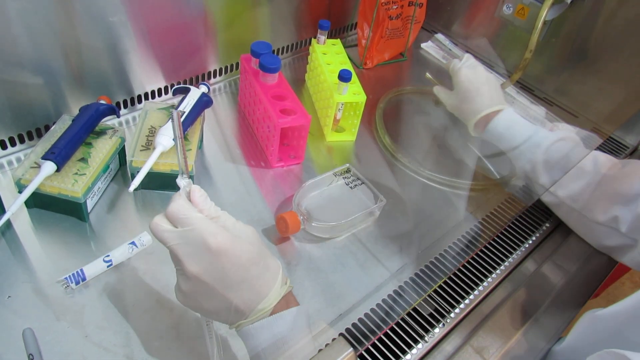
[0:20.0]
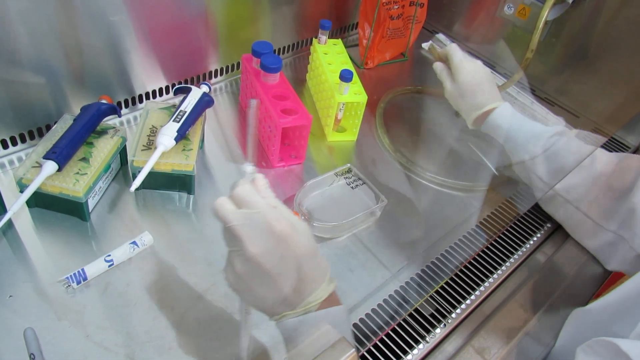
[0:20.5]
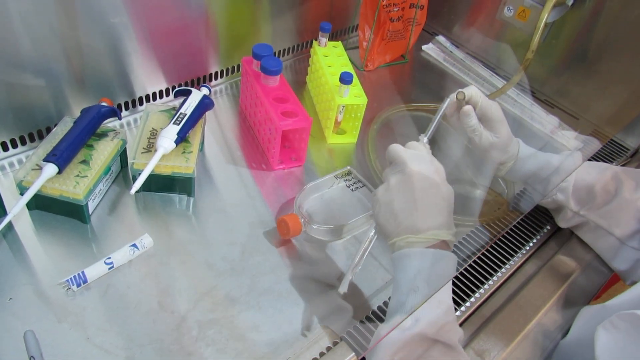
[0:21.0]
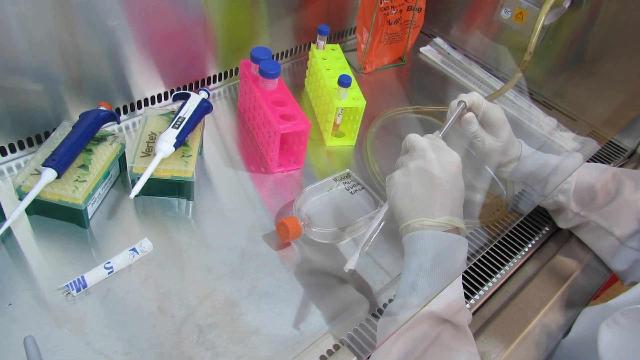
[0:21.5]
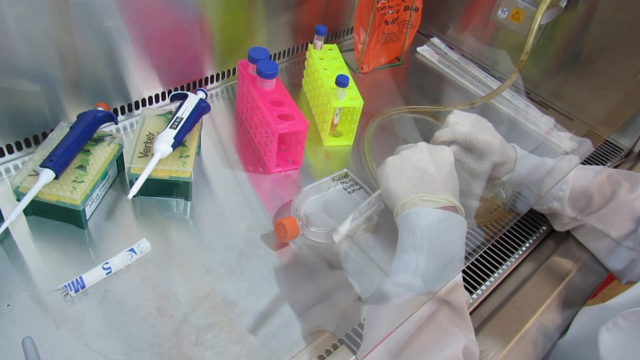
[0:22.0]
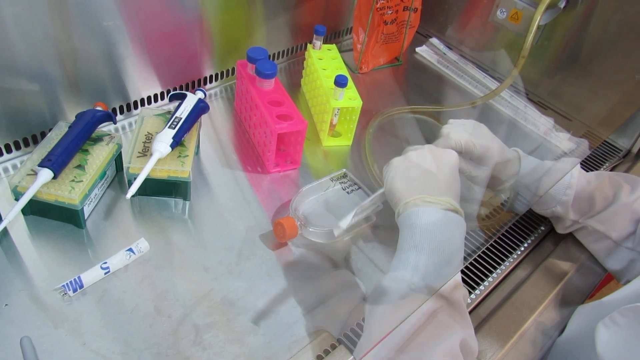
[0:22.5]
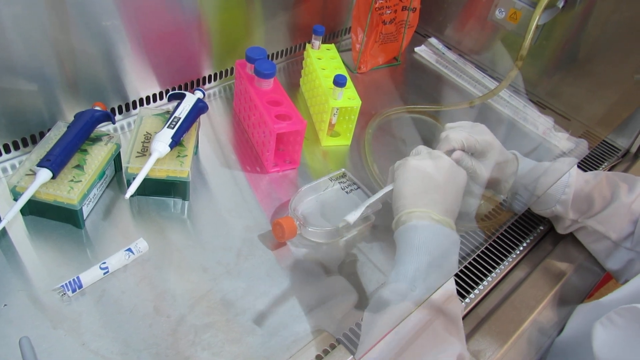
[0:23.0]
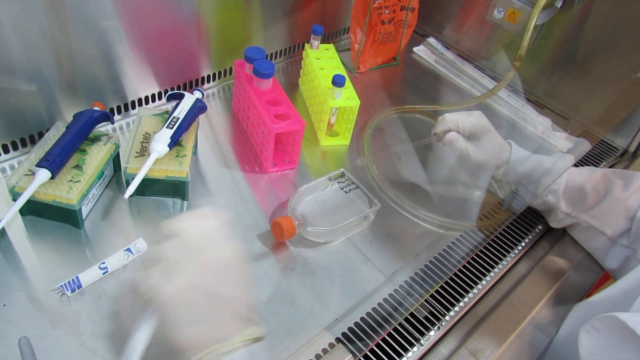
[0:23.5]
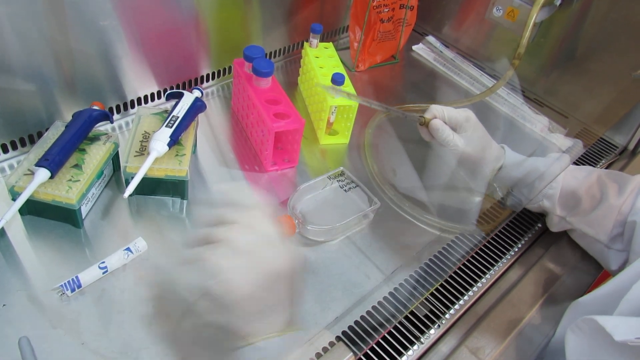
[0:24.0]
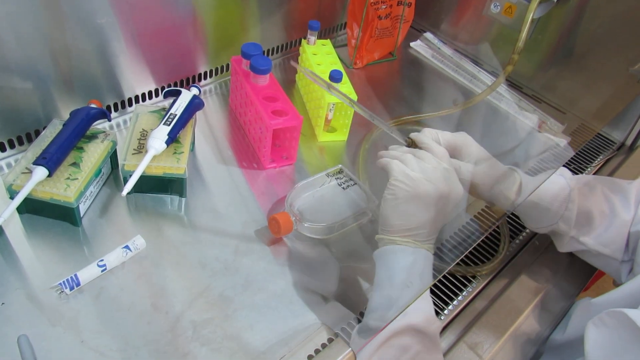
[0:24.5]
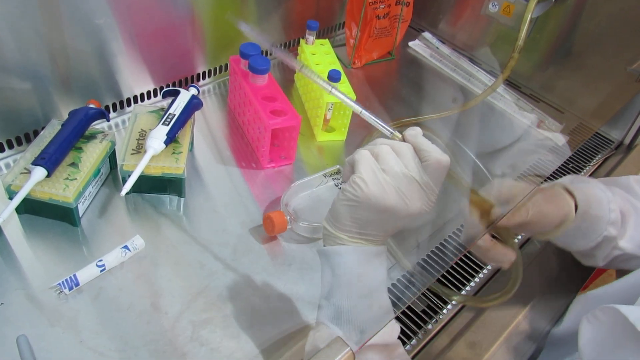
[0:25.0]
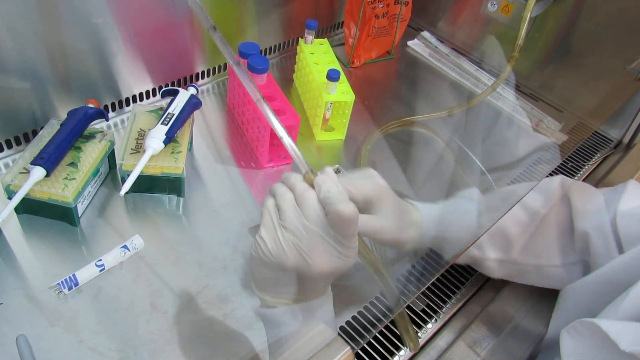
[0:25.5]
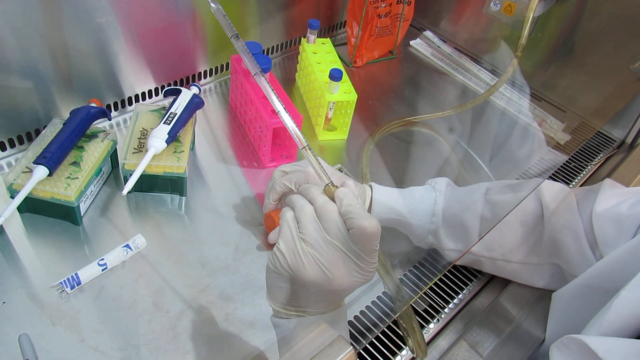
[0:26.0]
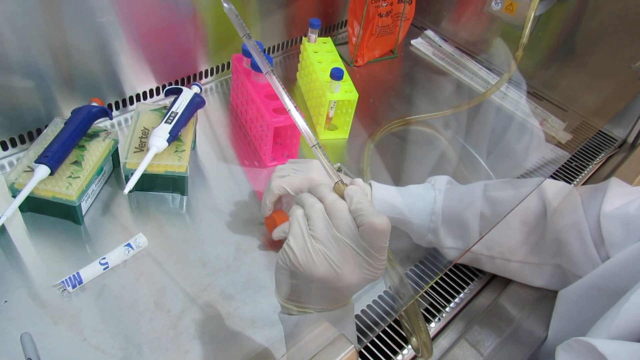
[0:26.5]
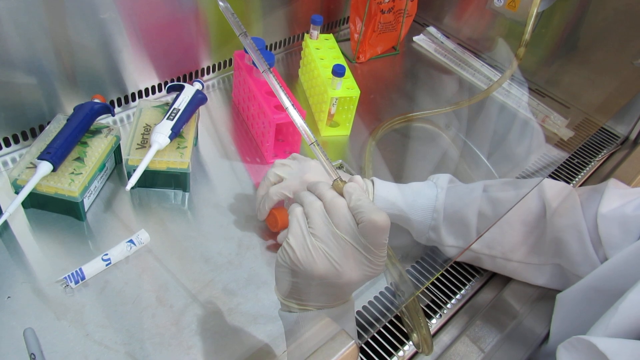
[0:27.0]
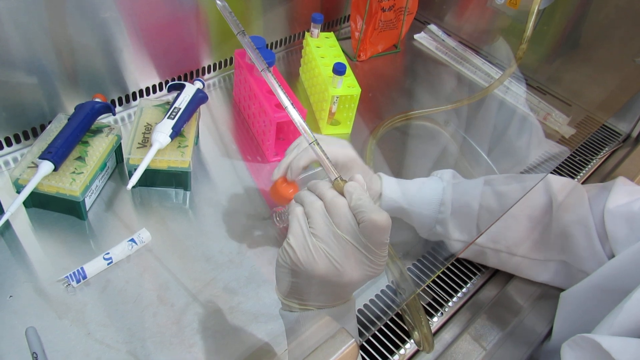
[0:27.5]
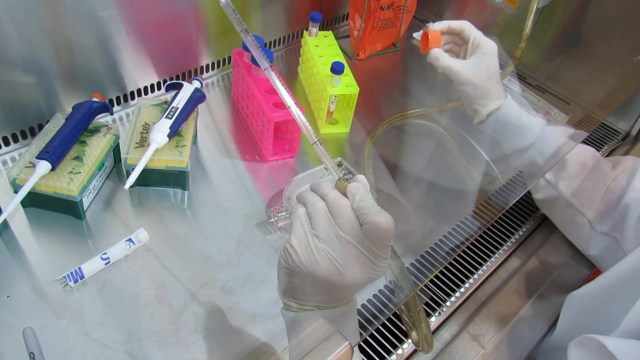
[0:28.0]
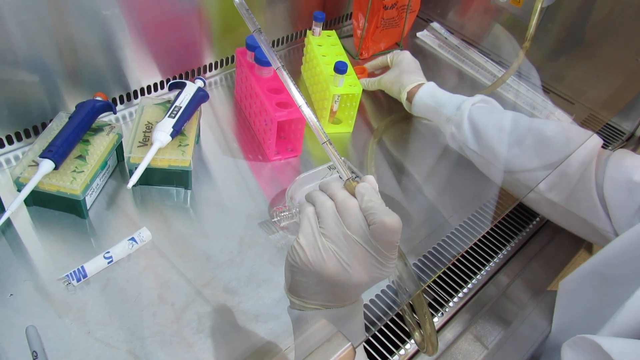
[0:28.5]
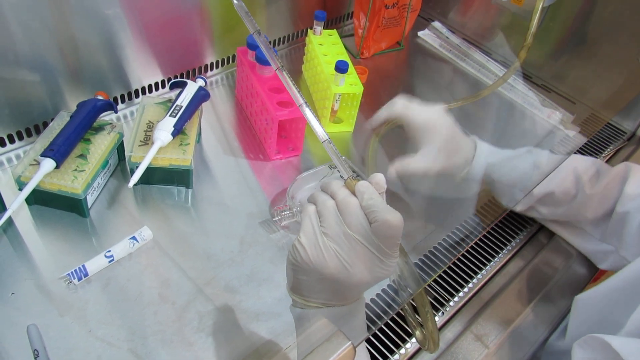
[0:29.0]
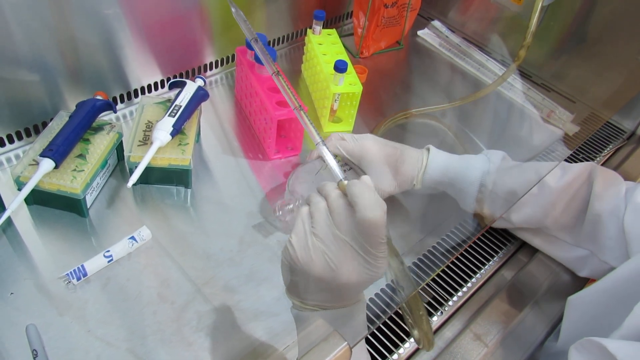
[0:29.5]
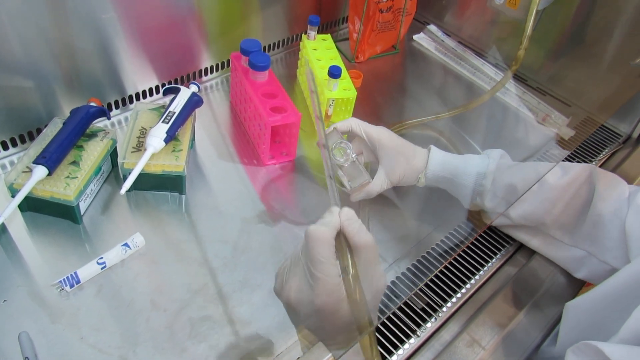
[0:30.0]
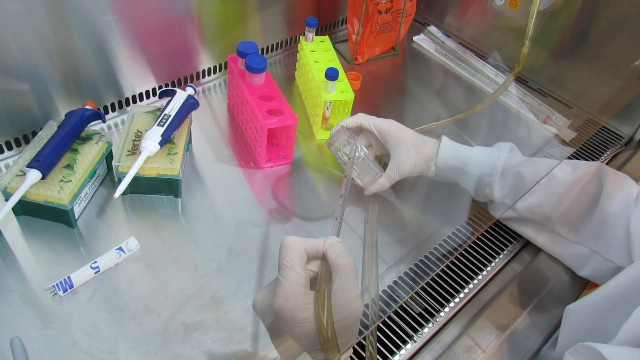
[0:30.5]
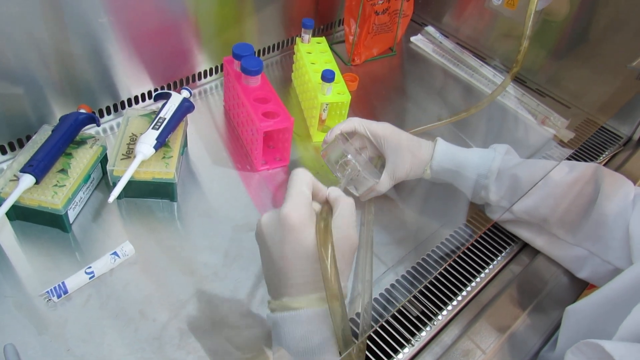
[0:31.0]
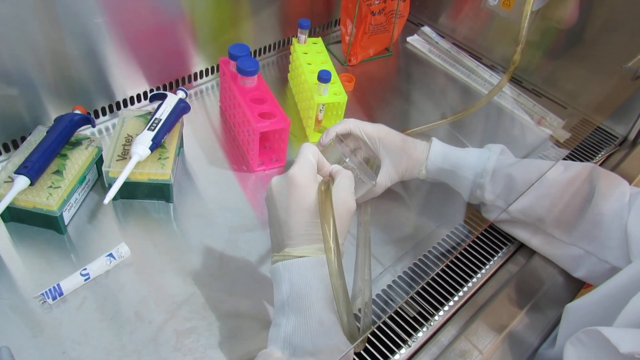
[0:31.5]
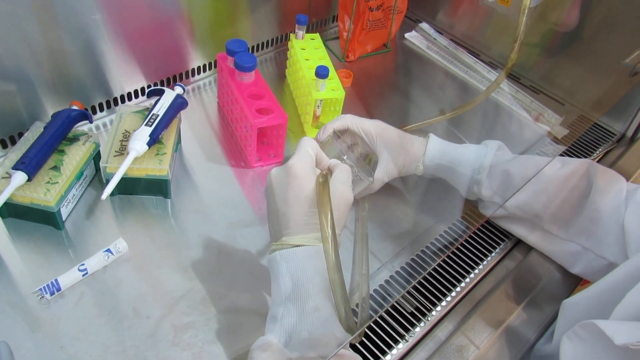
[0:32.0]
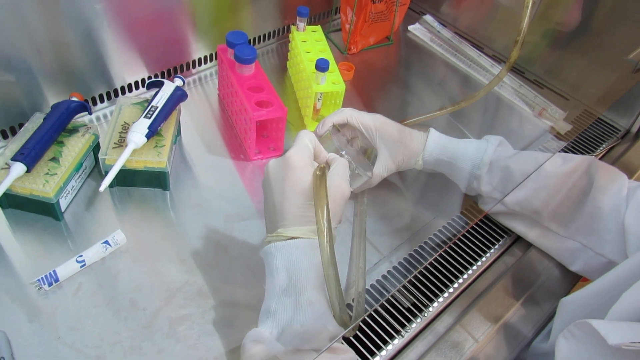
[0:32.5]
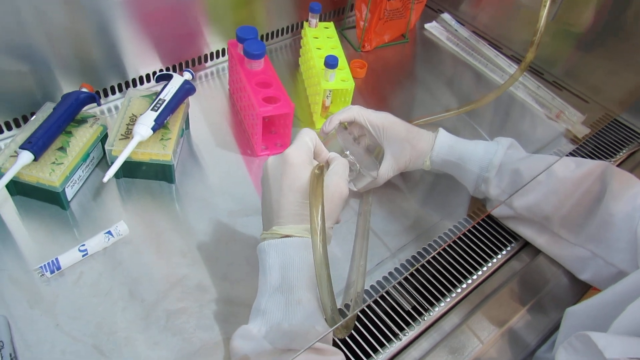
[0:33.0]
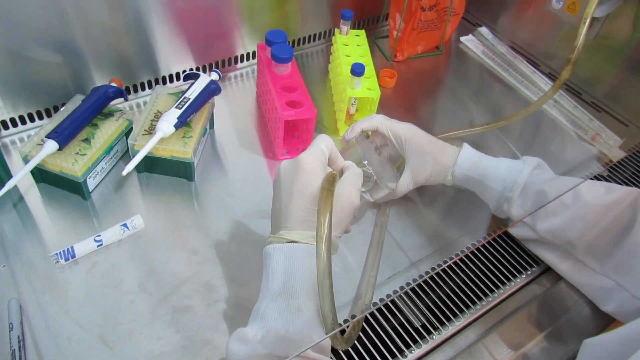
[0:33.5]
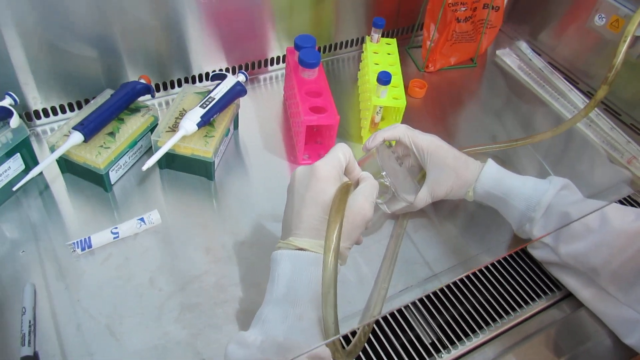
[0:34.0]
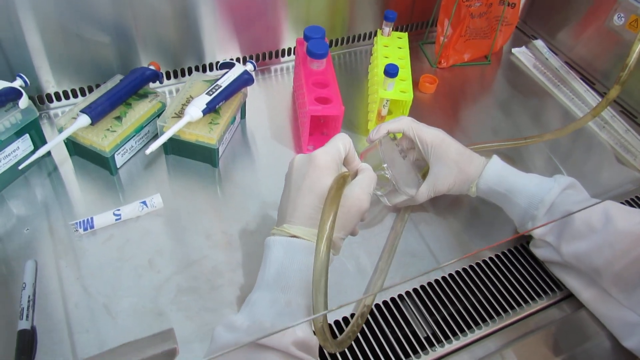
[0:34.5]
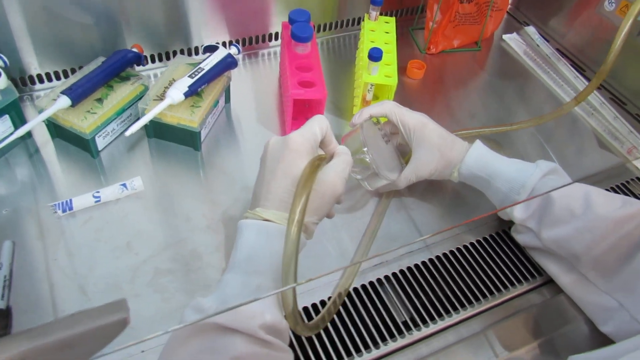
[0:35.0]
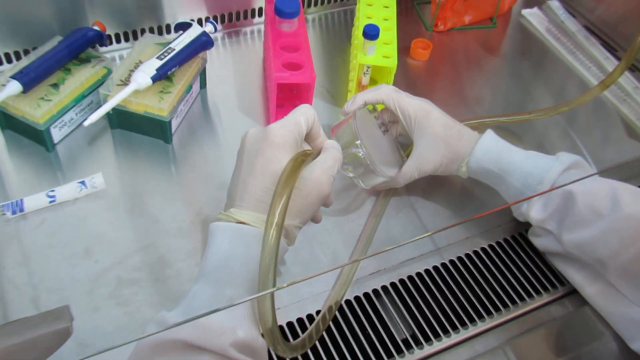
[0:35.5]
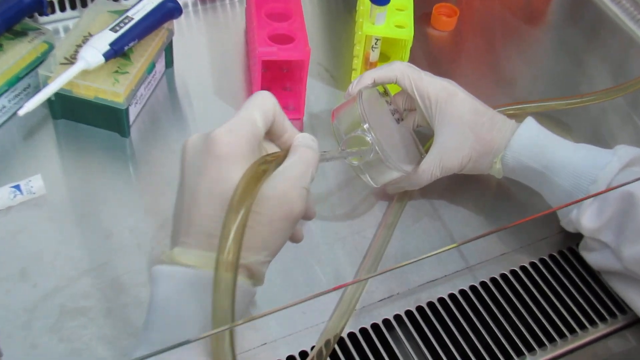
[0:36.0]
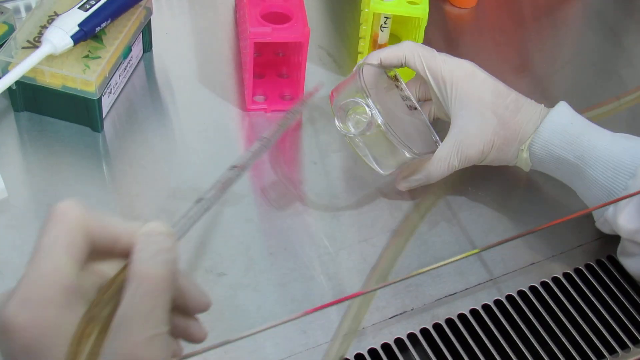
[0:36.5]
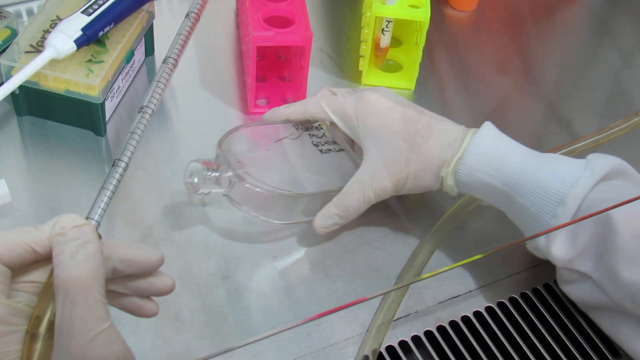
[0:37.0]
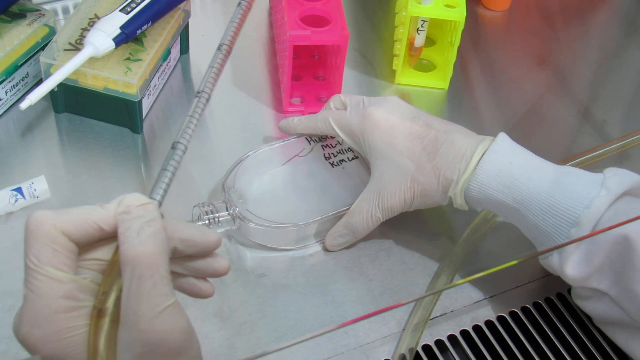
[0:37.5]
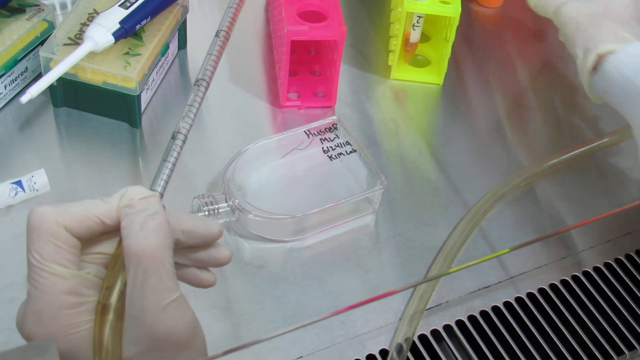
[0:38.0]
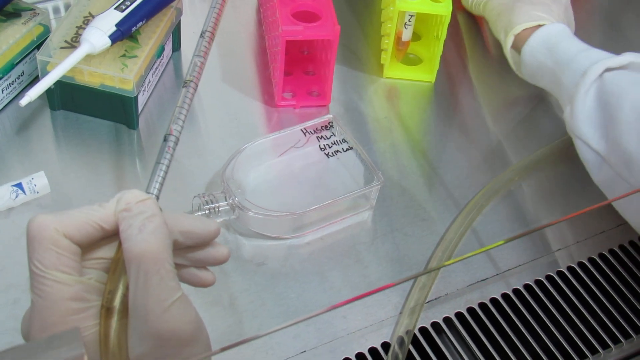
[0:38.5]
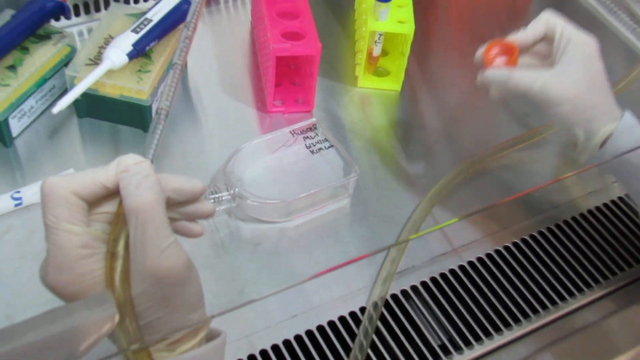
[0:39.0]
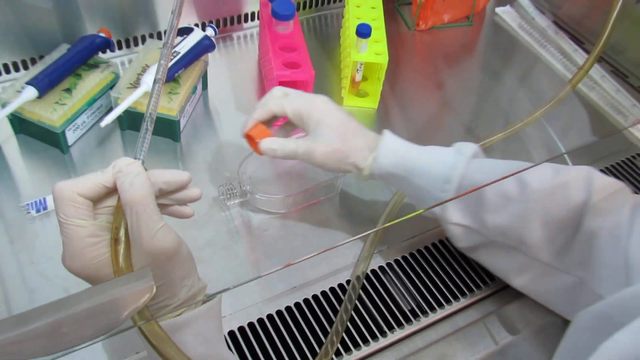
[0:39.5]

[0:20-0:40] The white medical gloves are still visible. There is something clear, possibly plastic or glass, where the person can slide their hands in, apparently to limit contamination. Vents run across horizontally, and there are vents on the back part of the metal; it may be a laboratory hood. There are two test tube holders: a pink one on the left and a neon greenish yellow one on the right. The gloved hands snap open what may be a clear container, then put it at the end of a long see-through tube resembling a much smaller garden hose, pushing the clear piece onto it. Using the thumb and pointer finger of the left hand, they put it inside the clear plastic or glass bottle.